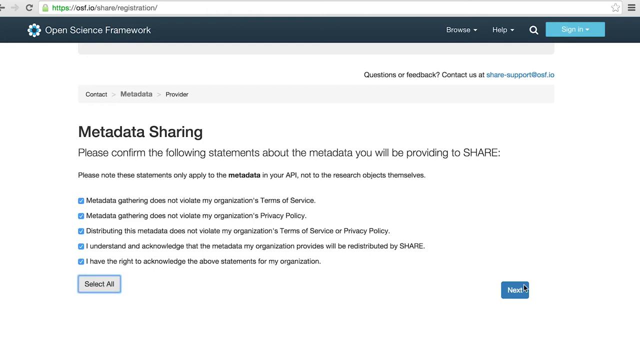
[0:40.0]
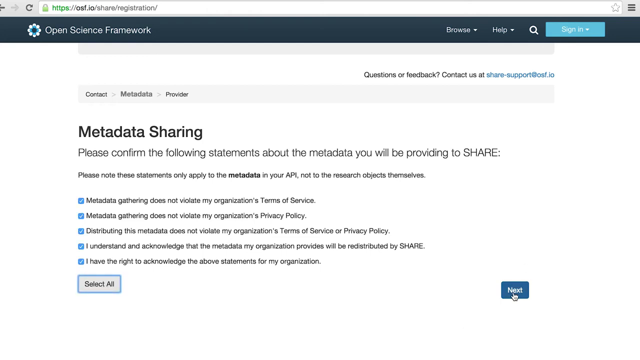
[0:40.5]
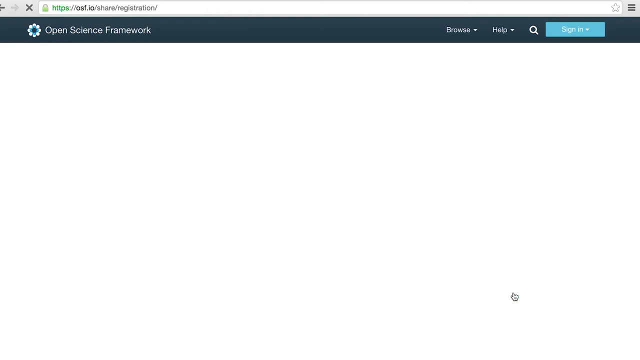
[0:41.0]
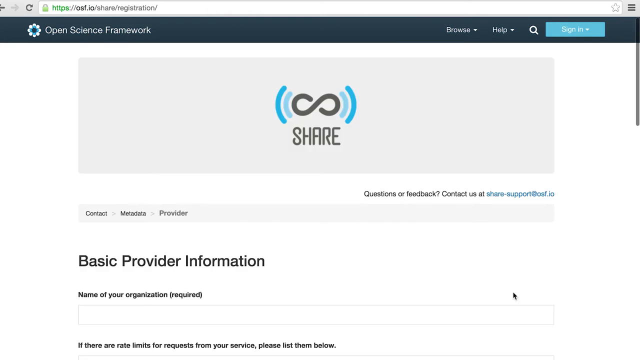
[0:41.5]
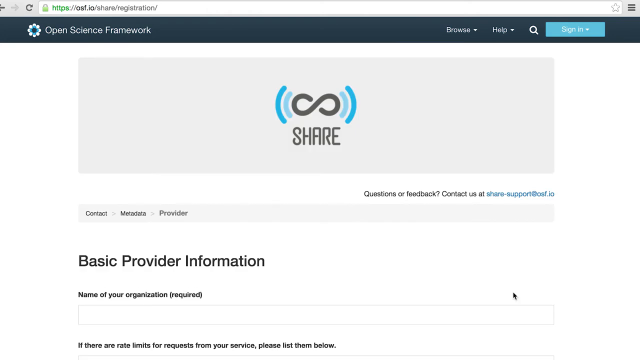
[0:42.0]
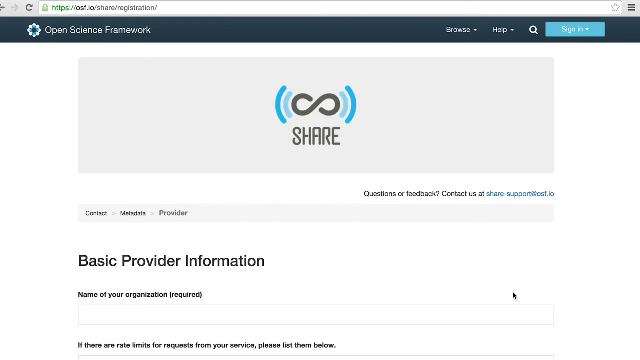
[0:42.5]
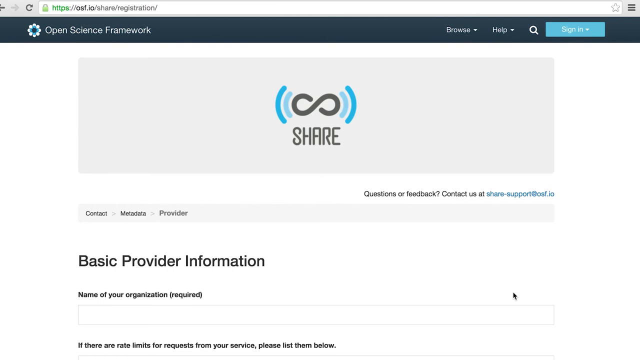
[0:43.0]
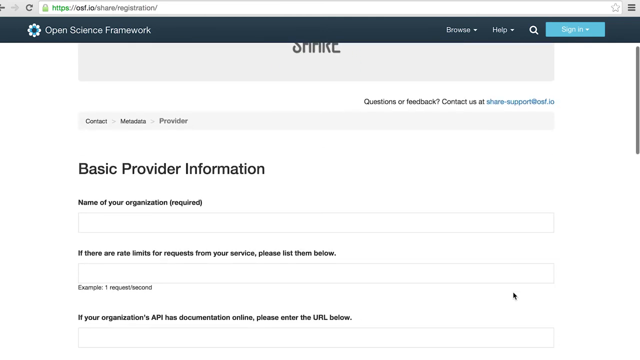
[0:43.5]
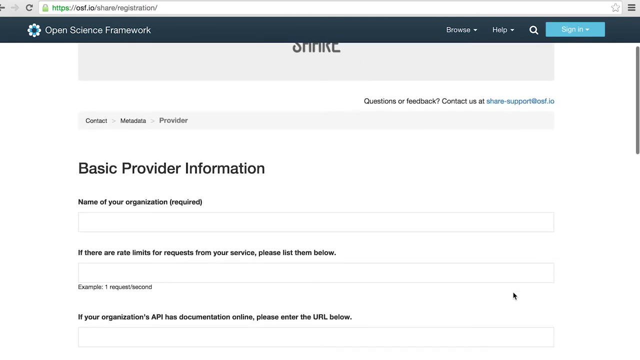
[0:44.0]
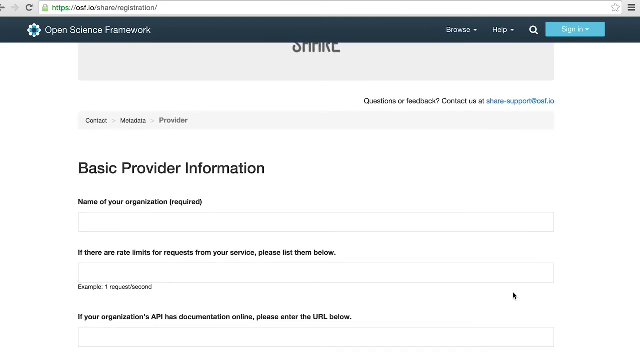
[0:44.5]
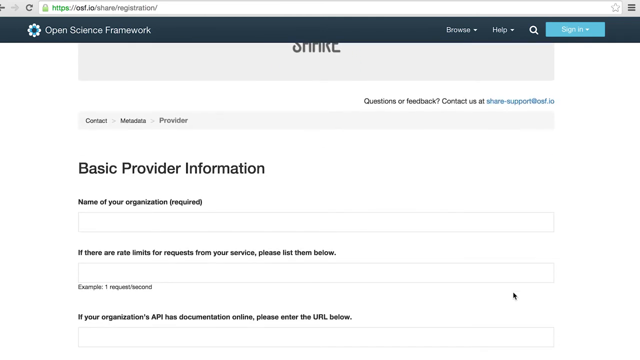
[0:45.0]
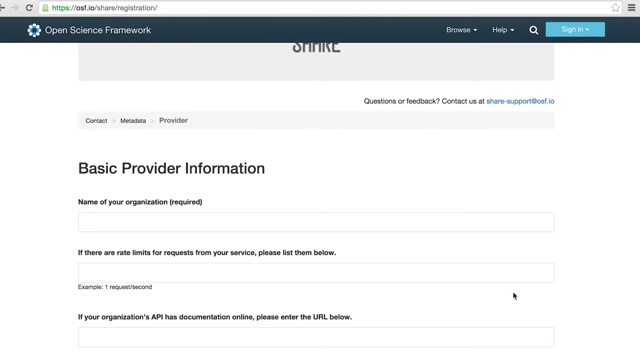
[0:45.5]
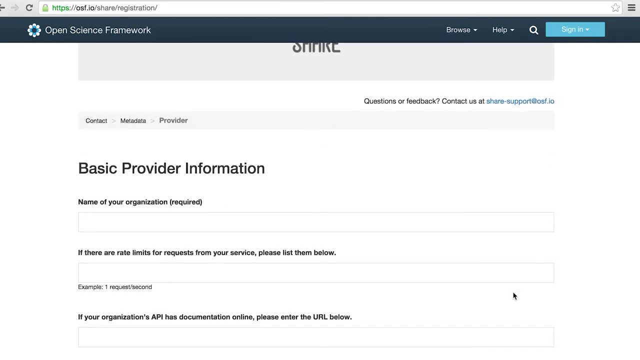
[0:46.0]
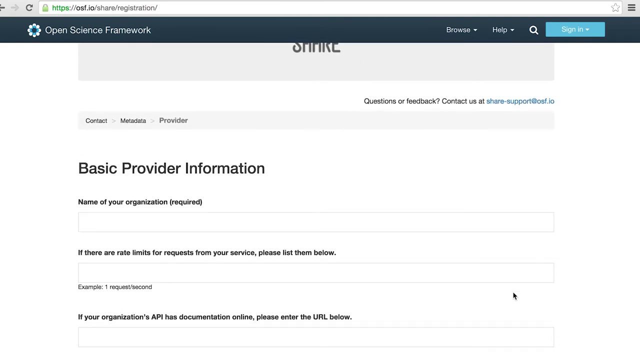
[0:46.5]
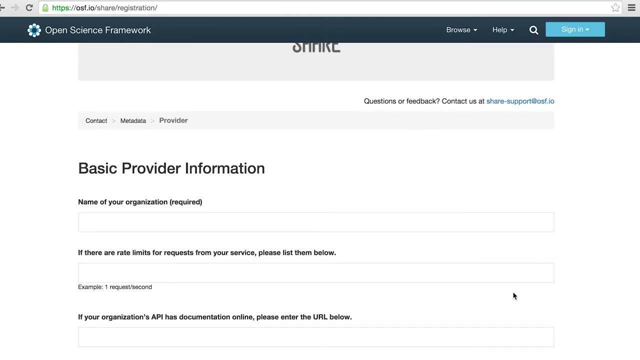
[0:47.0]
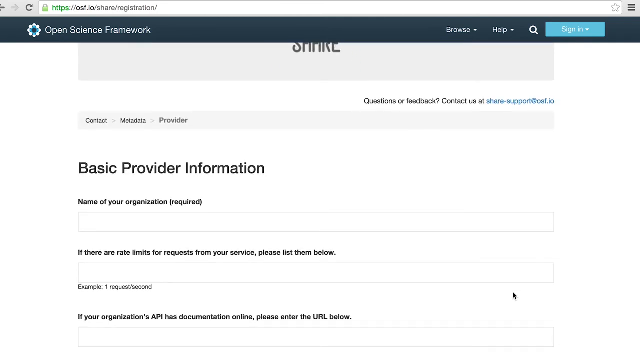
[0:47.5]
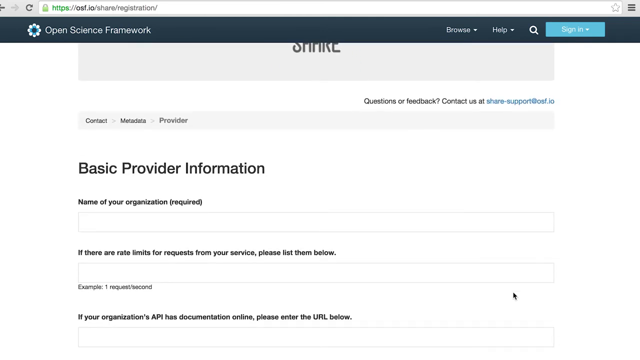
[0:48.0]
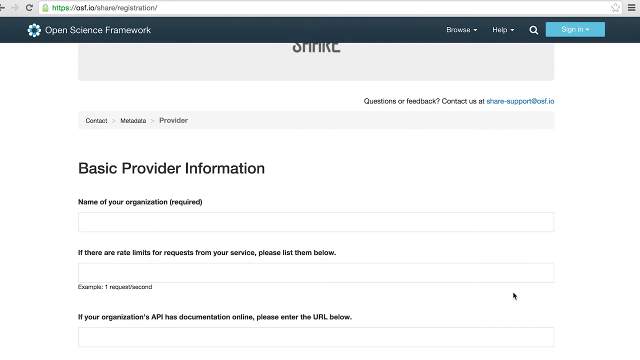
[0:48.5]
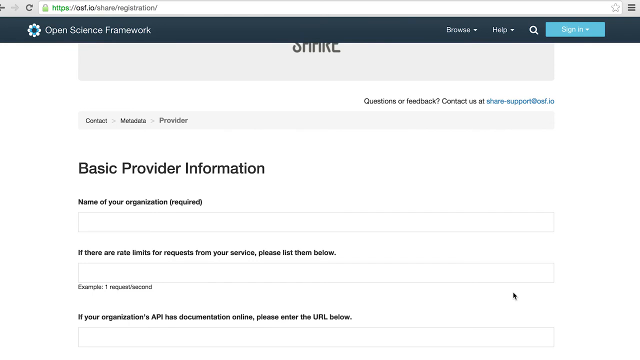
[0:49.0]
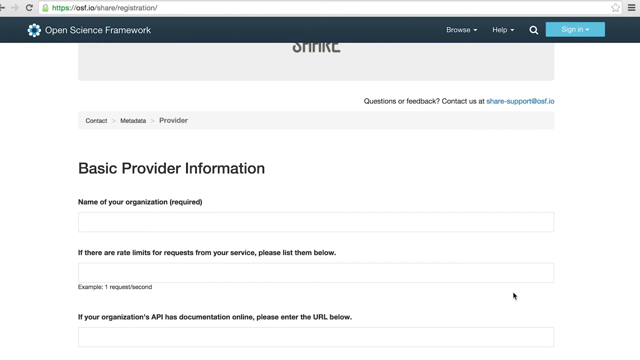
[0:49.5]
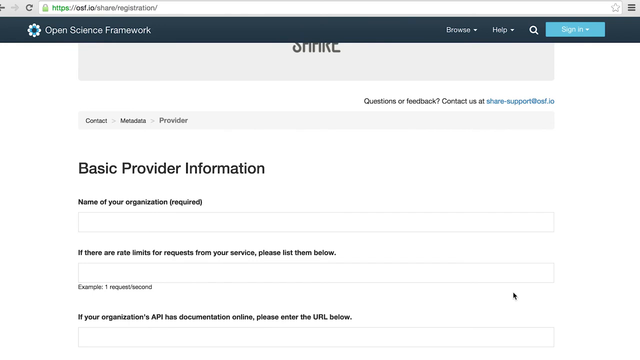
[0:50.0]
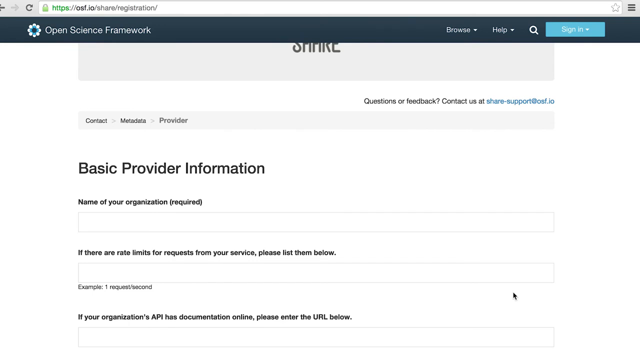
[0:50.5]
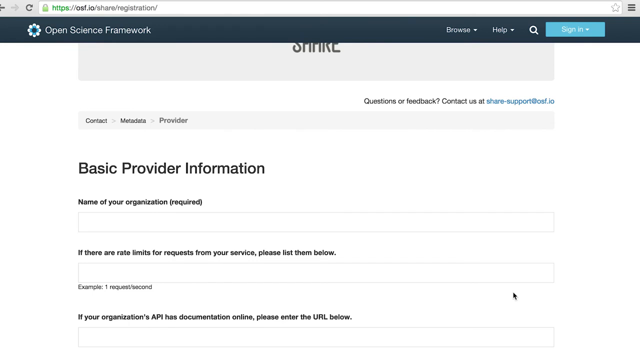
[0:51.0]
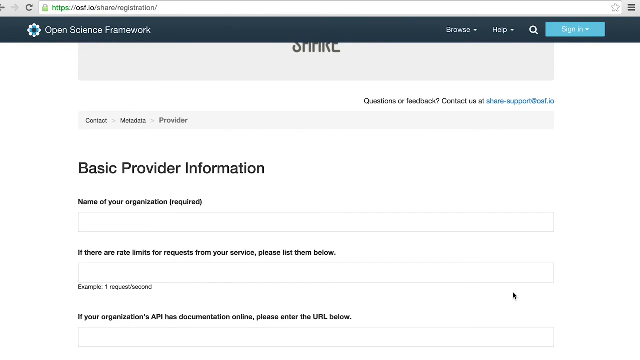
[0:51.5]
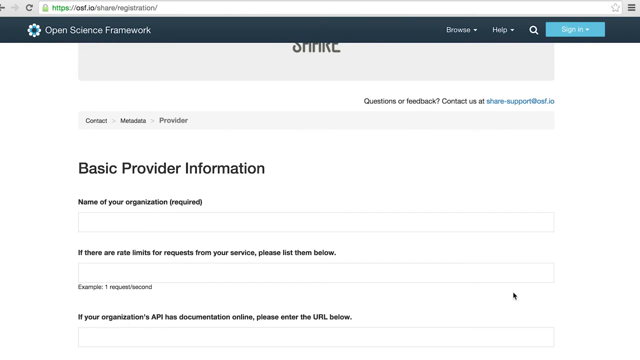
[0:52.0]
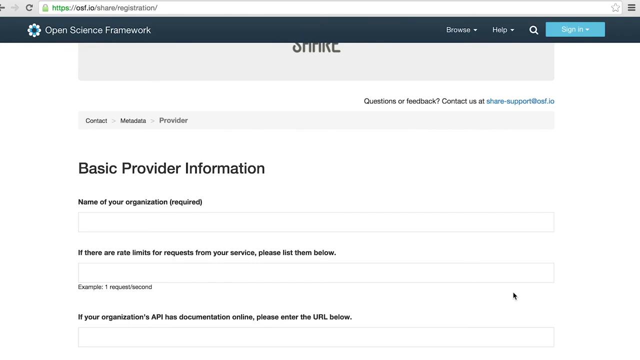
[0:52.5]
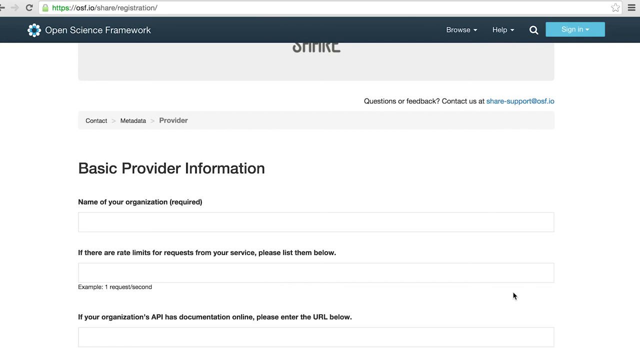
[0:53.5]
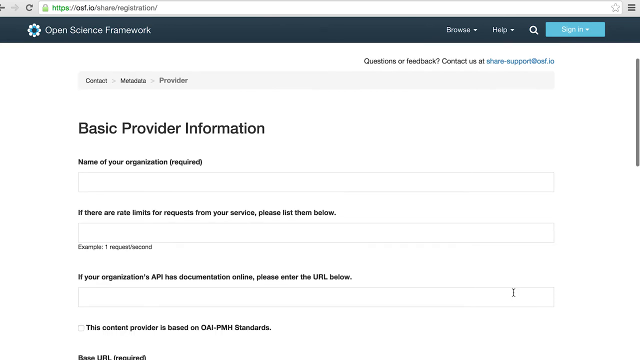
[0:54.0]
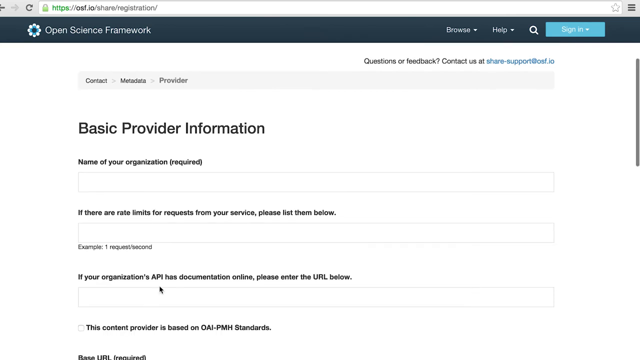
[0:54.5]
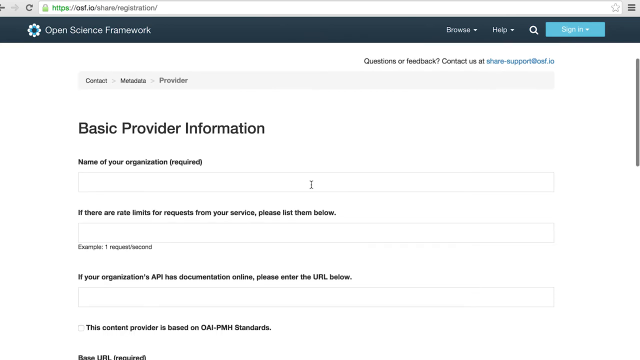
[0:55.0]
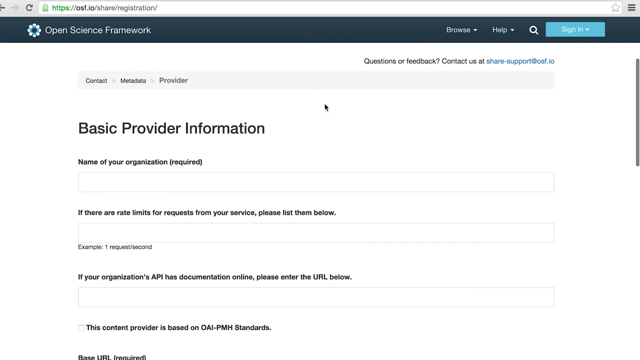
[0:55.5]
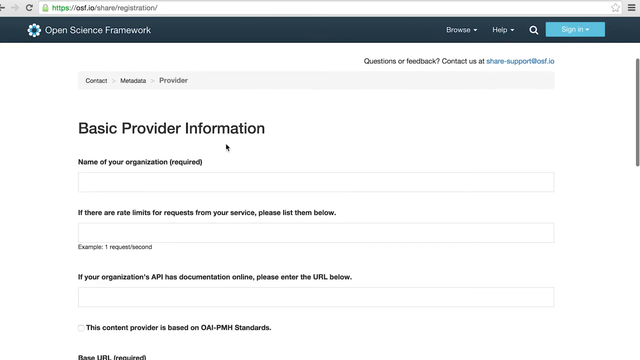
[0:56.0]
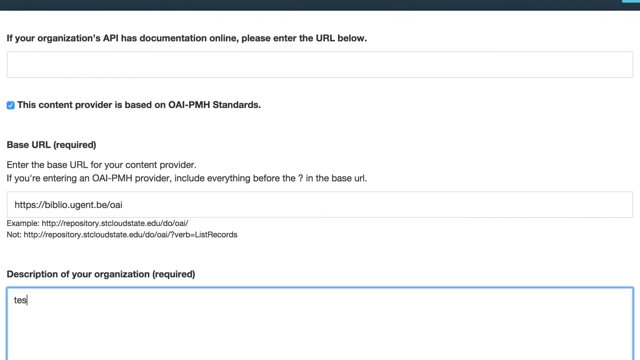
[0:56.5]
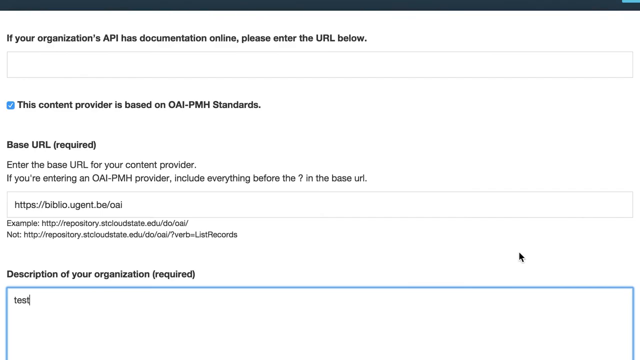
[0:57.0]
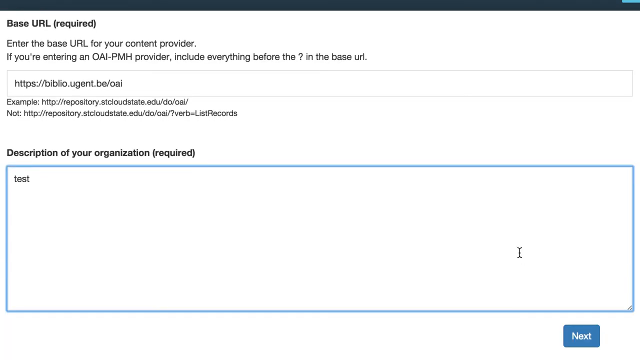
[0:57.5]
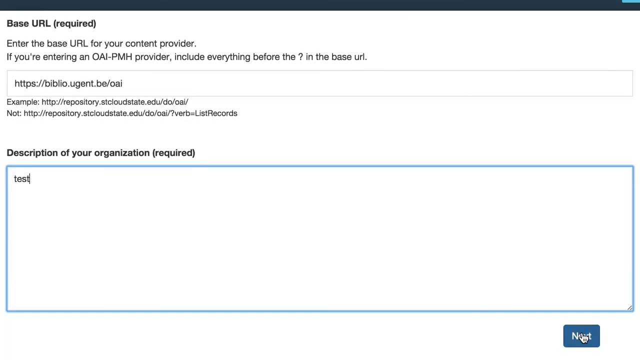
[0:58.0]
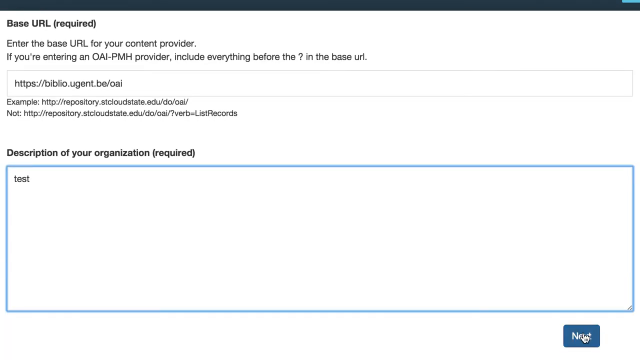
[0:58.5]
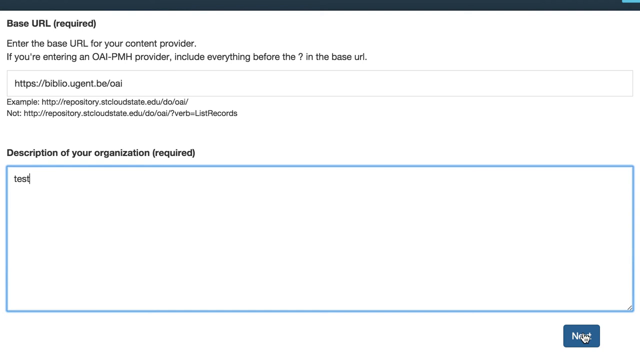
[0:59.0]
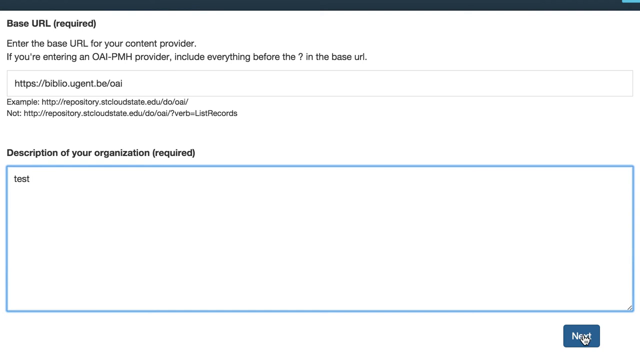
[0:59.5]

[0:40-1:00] After the details are confirmed and next is pressed, the page scrolls down to a field for the name of the organization and a field reading "if there are any limits or requests from your service please list them." There is also a section where a URL is to be entered. A description field has "test" written in it, and next is pressed as part of registering the account.